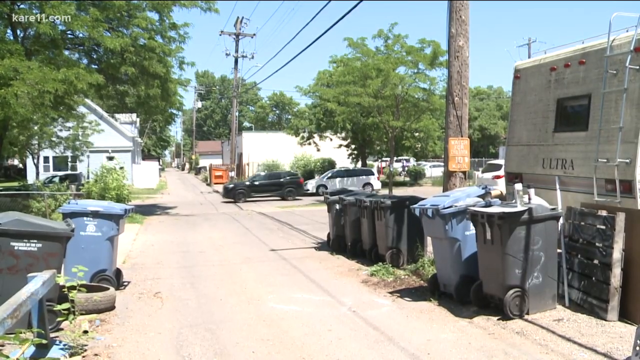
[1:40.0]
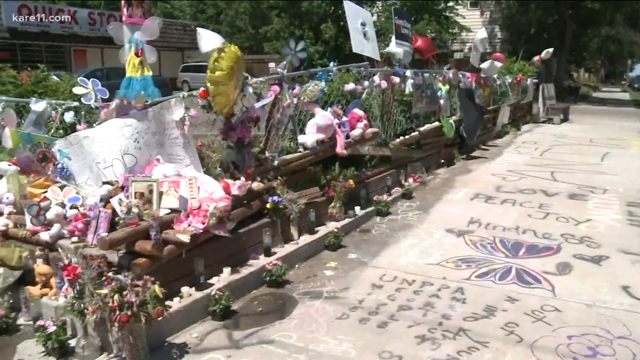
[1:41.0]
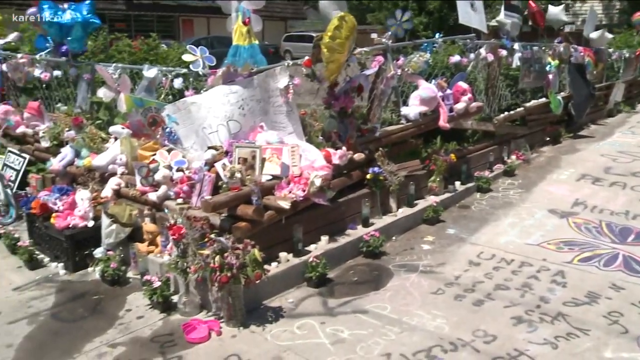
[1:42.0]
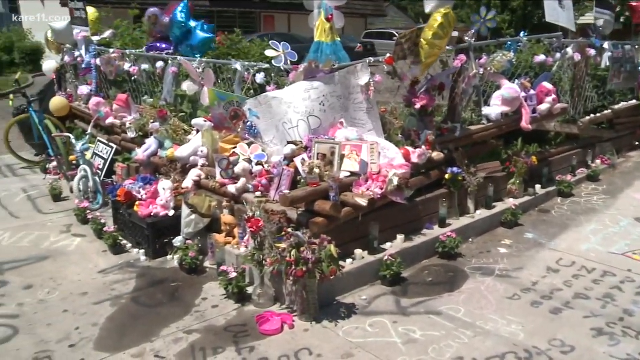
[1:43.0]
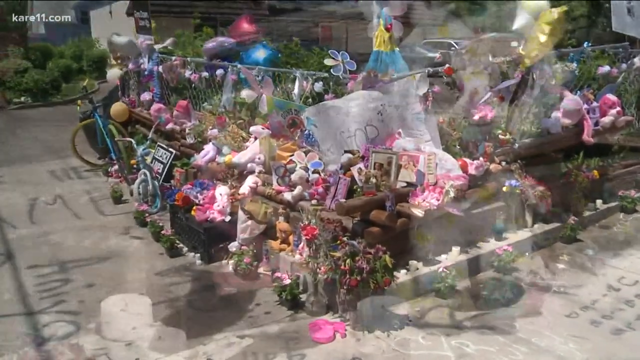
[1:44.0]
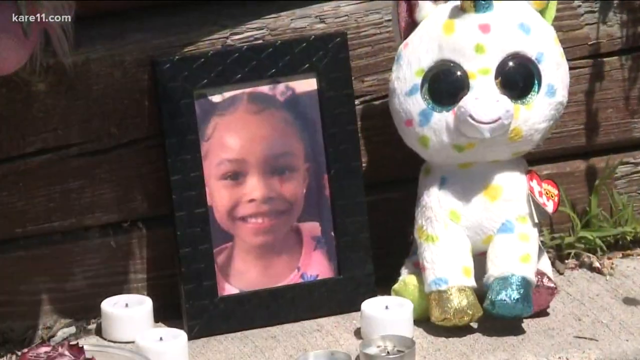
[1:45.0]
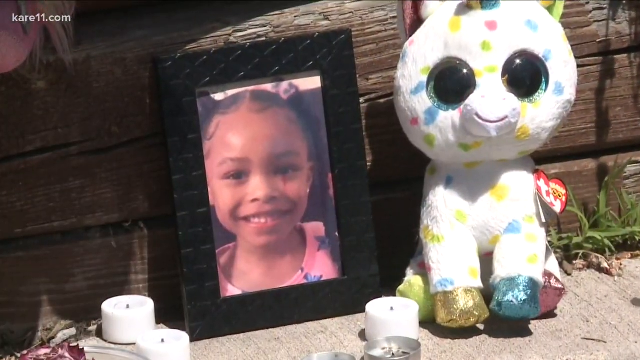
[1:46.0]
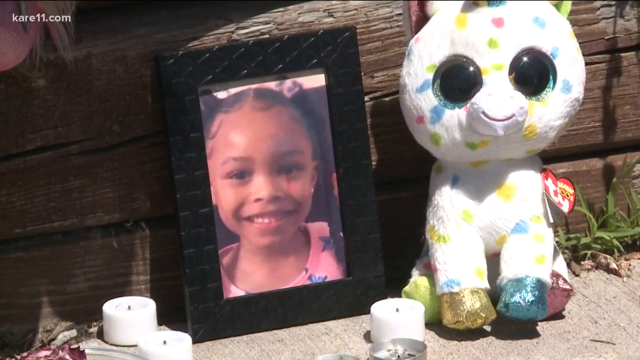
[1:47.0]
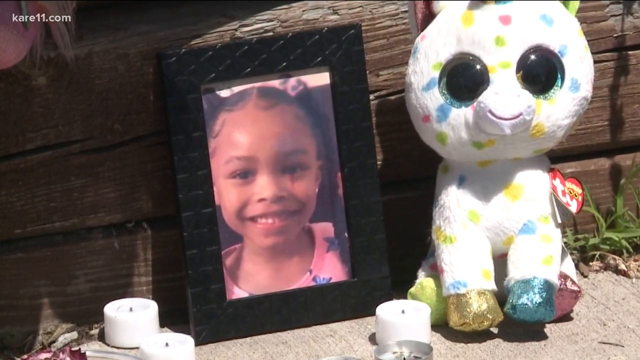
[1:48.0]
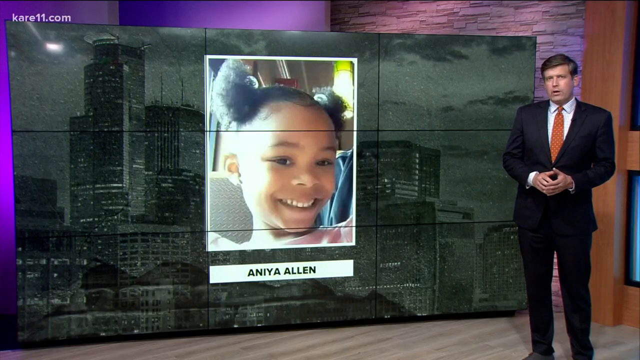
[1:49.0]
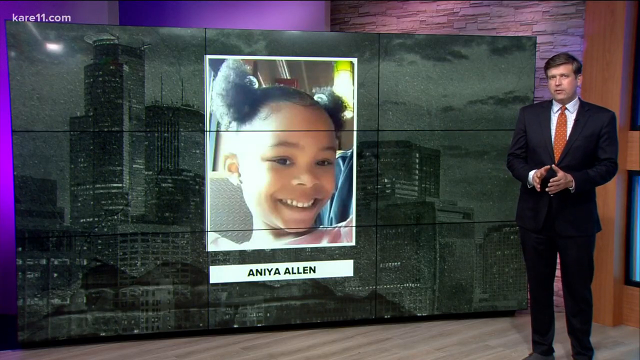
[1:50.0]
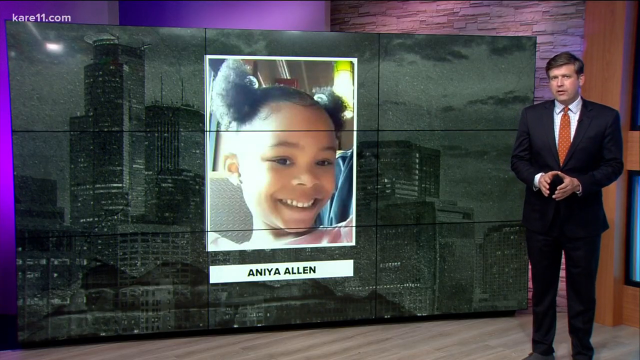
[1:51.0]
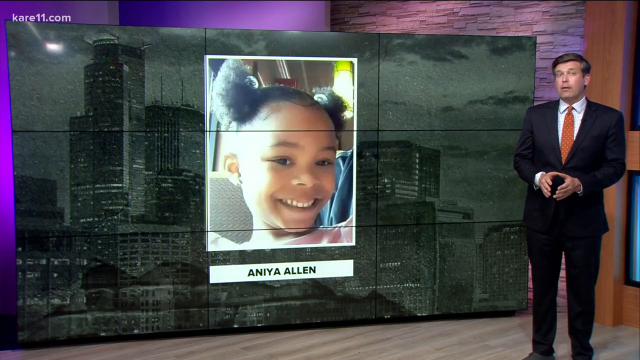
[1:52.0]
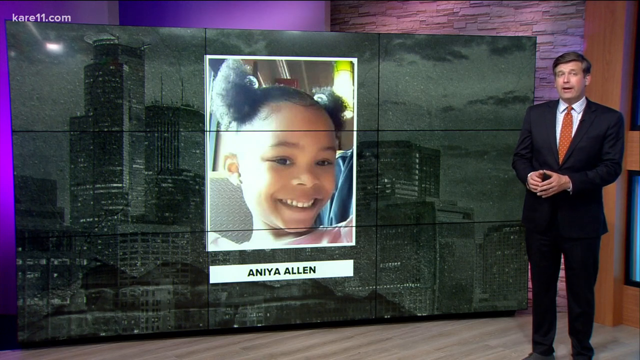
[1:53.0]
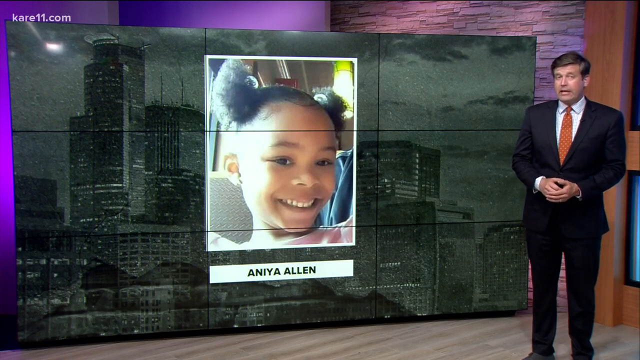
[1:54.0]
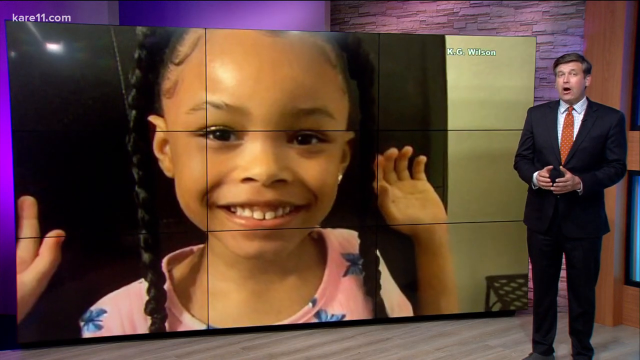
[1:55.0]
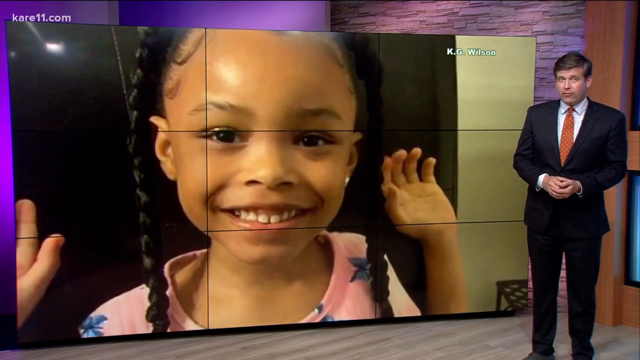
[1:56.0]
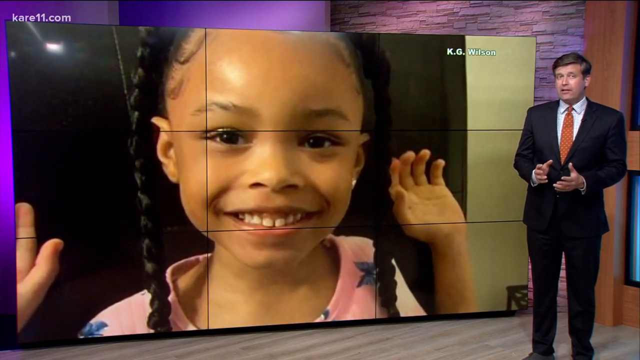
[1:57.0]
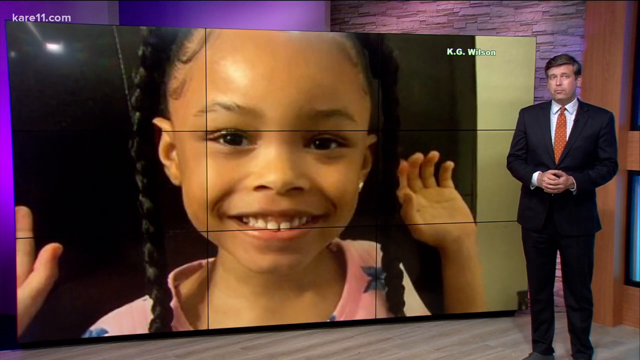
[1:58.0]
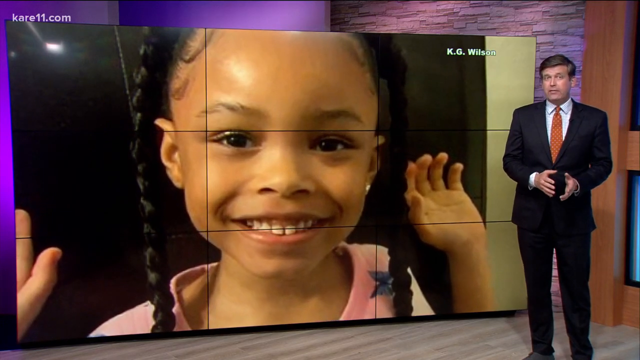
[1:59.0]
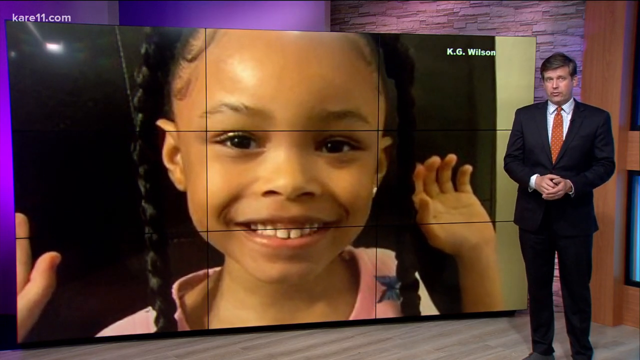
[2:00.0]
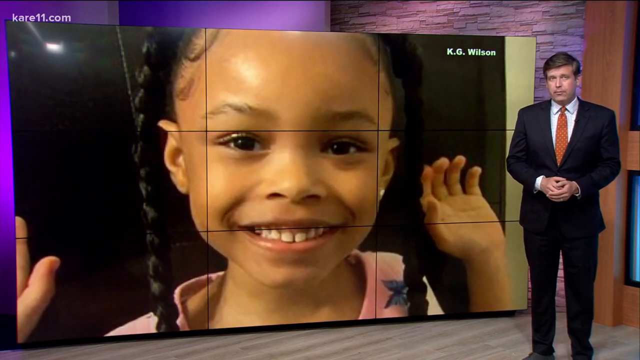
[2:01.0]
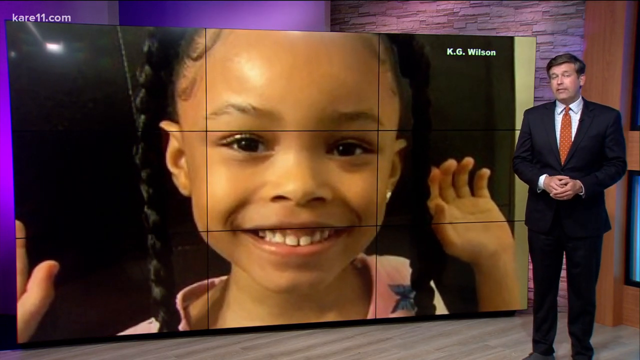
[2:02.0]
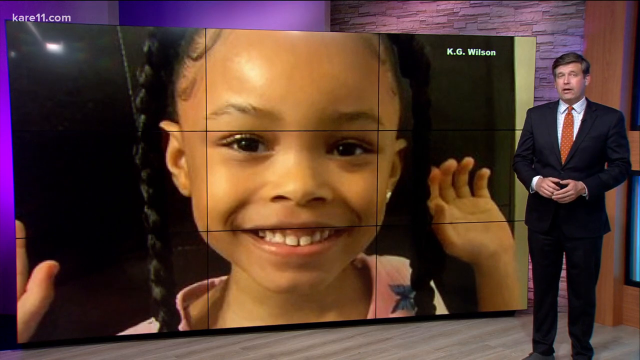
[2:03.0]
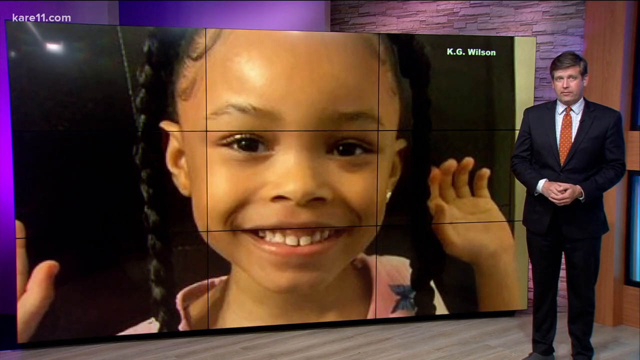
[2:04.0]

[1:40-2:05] The scene shows what appears to be the place where the shooting took place, seemingly on a side road. There is a memorial with pink items and, apparently, the girl's picture in a picture frame, with stuffed animals and candles next to it. Her image is then shown again while the news reporter talks; he is on the right side of her picture and of the screen, and as he talks his hands are open, sometimes with the palms open and parallel to one another. Then the whole news monitor shows her picture, with her smiling.